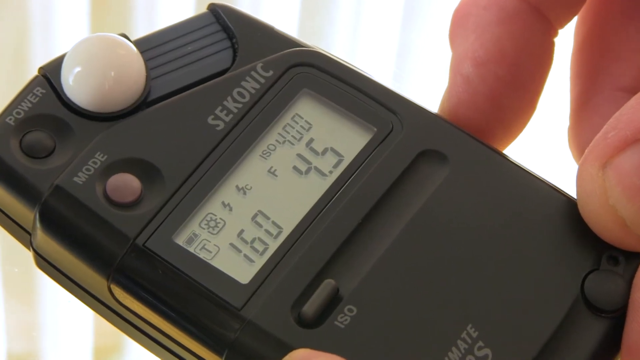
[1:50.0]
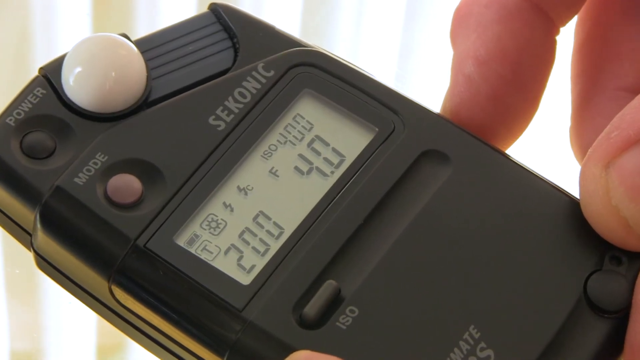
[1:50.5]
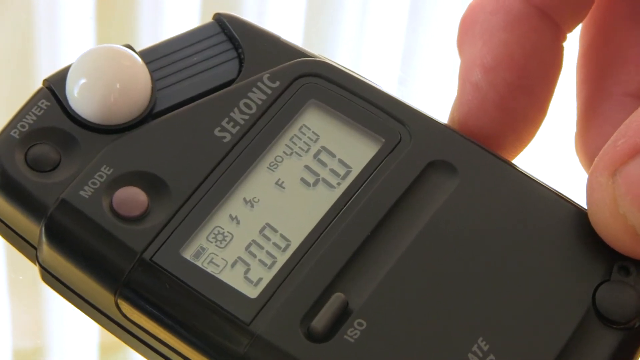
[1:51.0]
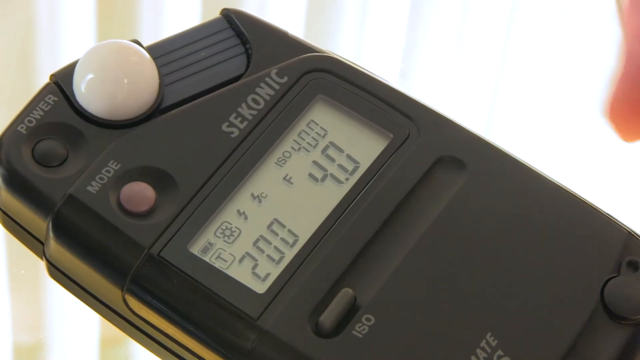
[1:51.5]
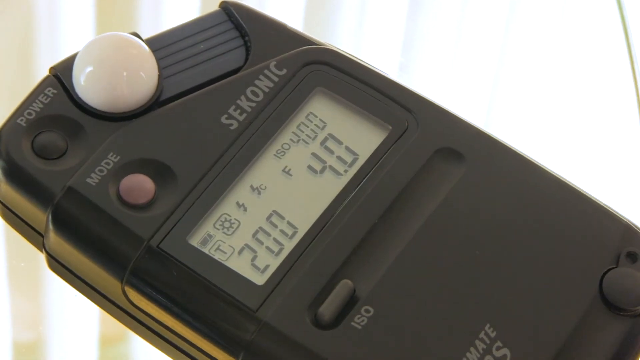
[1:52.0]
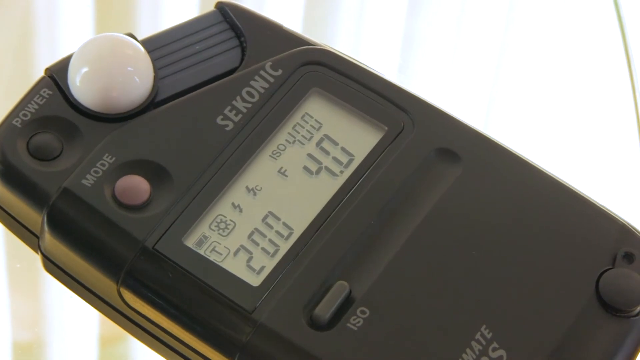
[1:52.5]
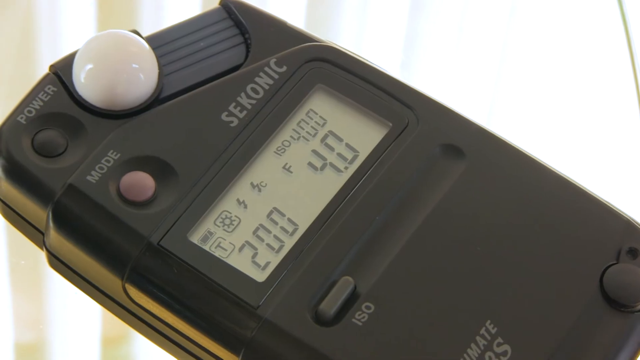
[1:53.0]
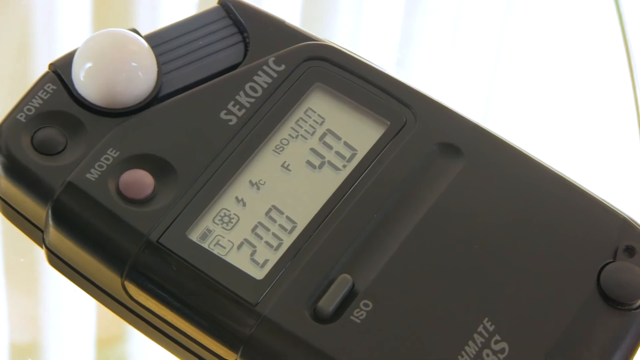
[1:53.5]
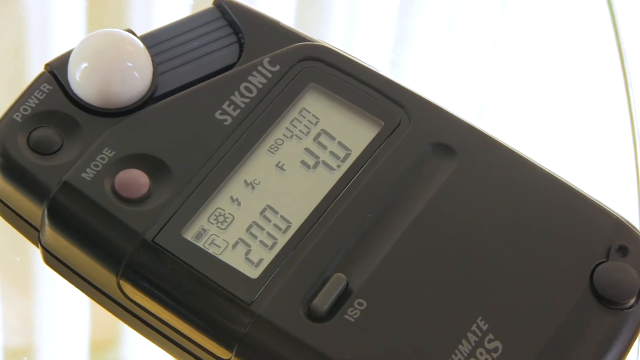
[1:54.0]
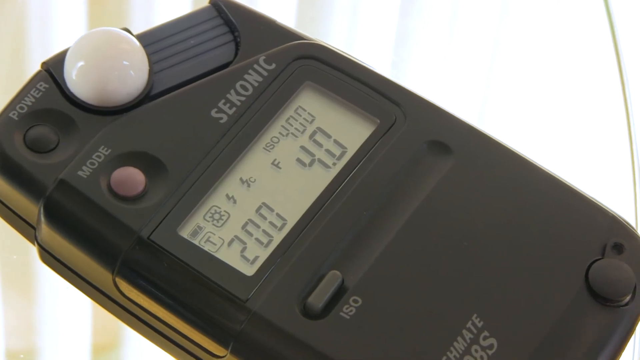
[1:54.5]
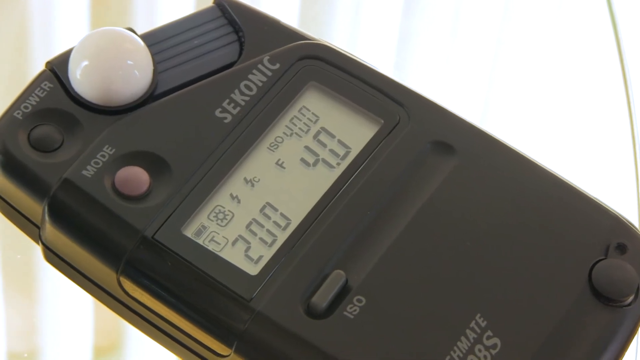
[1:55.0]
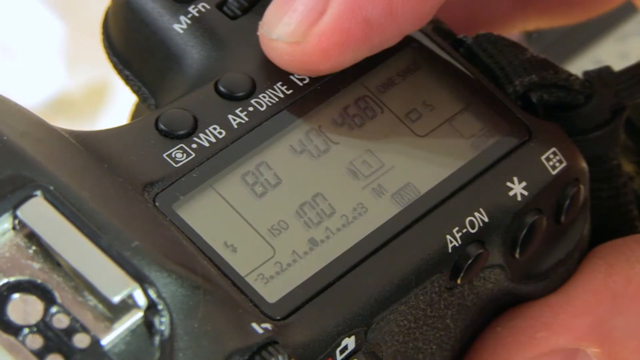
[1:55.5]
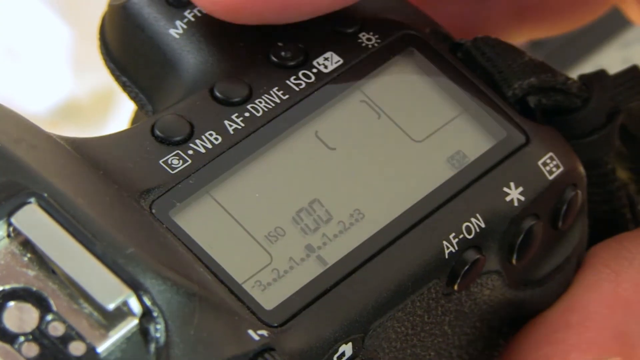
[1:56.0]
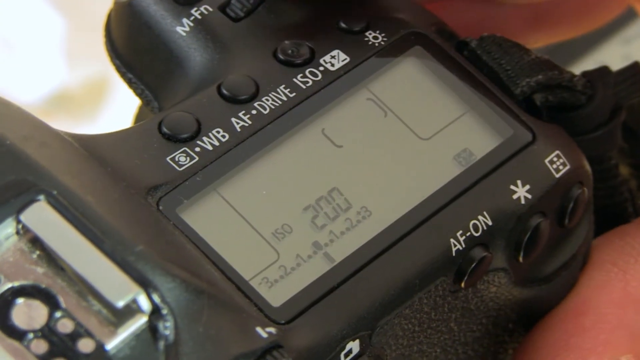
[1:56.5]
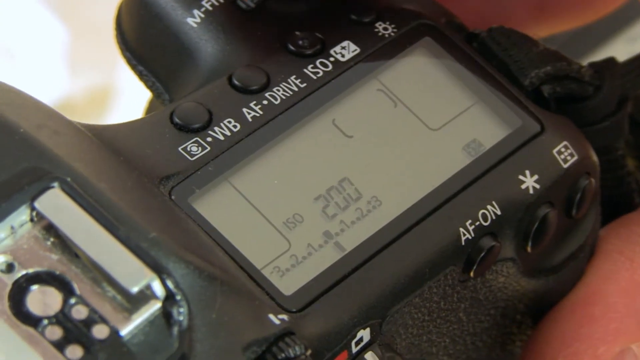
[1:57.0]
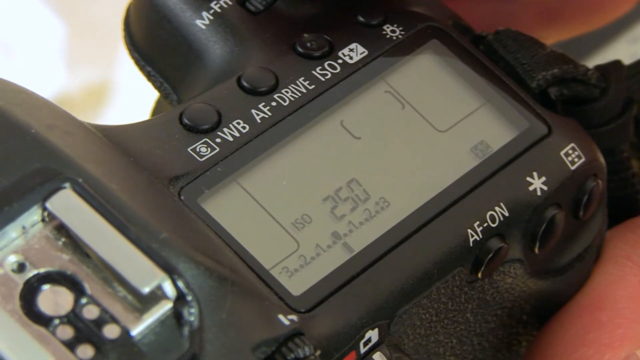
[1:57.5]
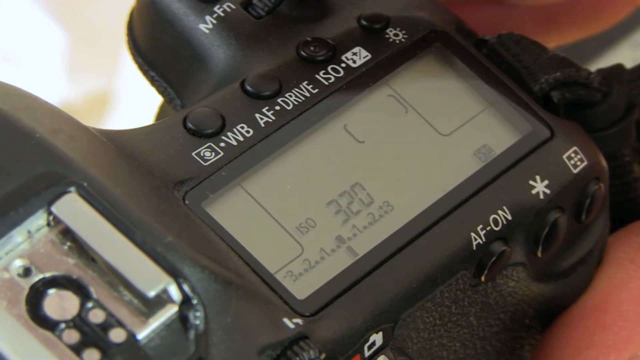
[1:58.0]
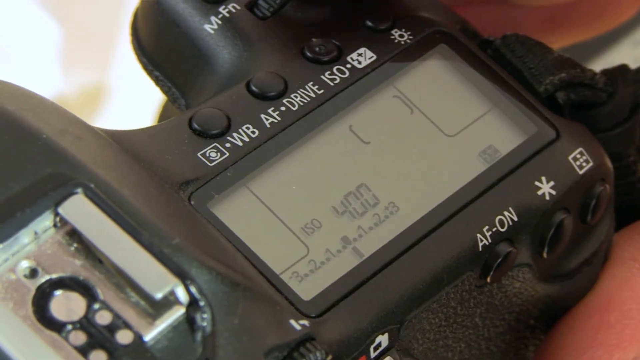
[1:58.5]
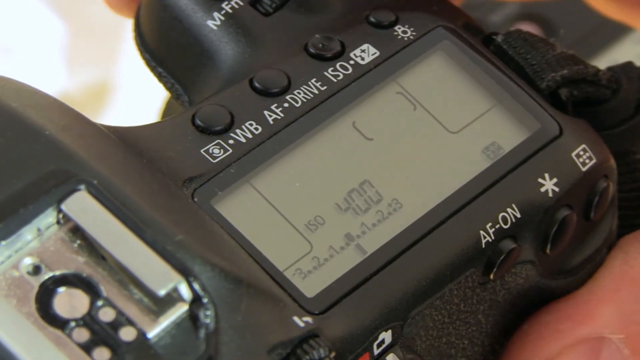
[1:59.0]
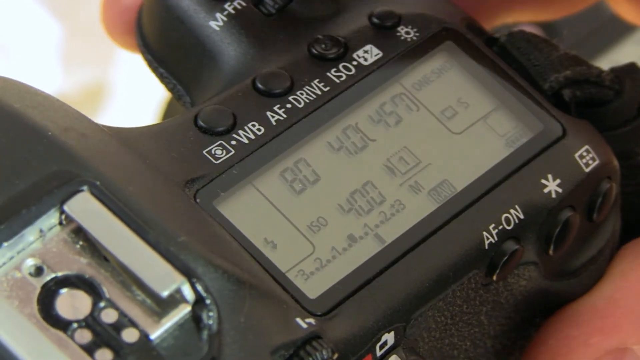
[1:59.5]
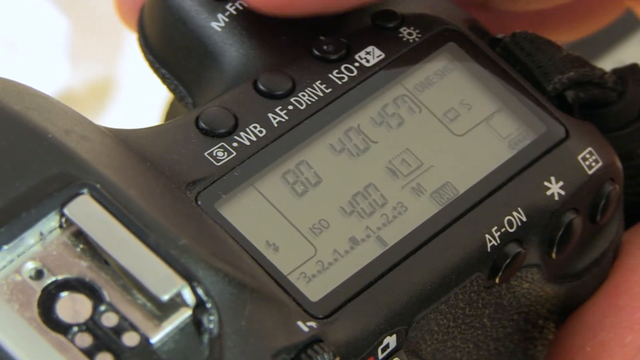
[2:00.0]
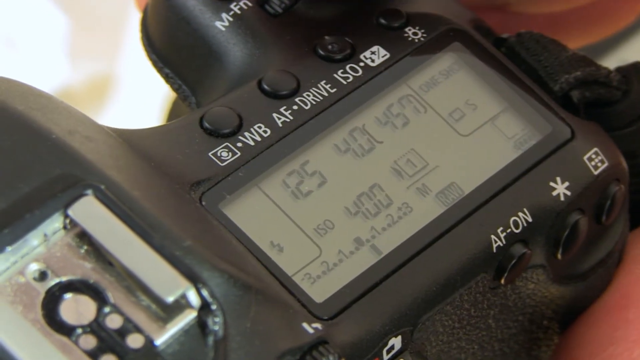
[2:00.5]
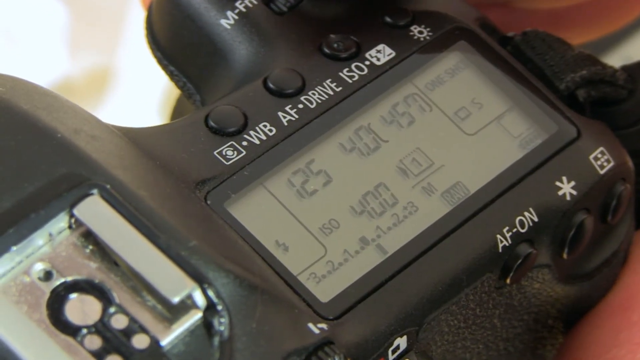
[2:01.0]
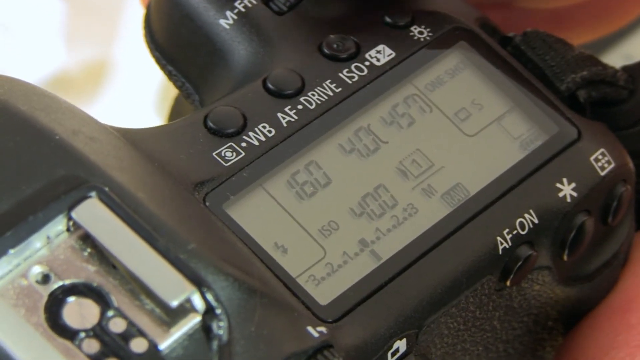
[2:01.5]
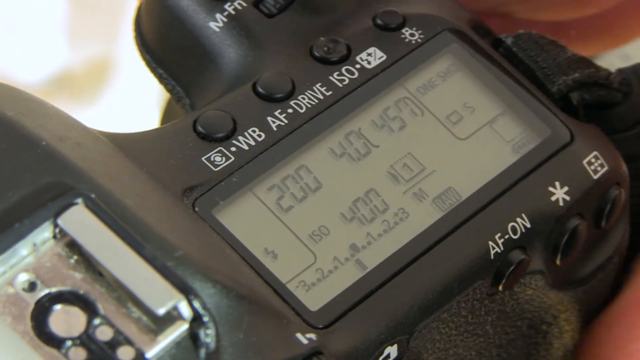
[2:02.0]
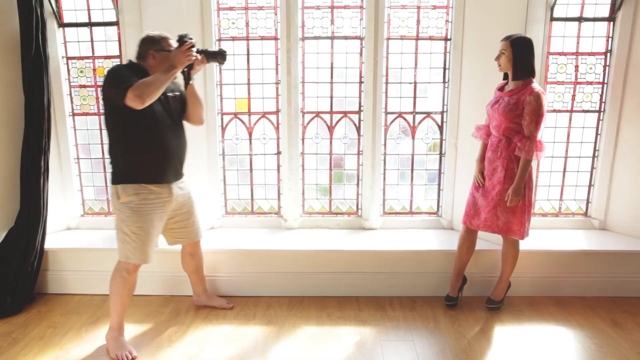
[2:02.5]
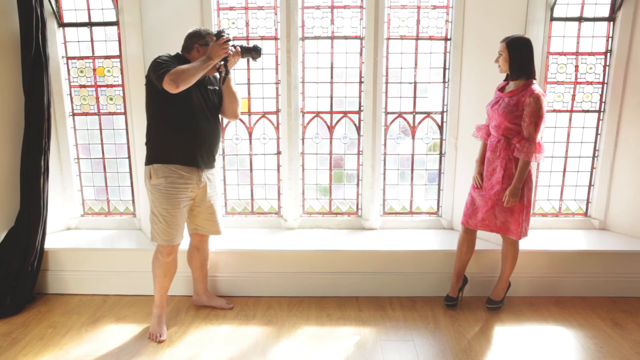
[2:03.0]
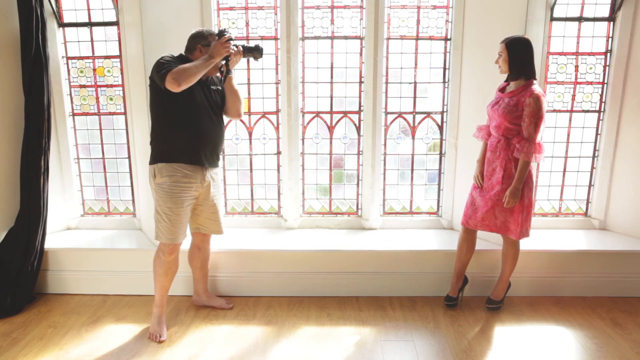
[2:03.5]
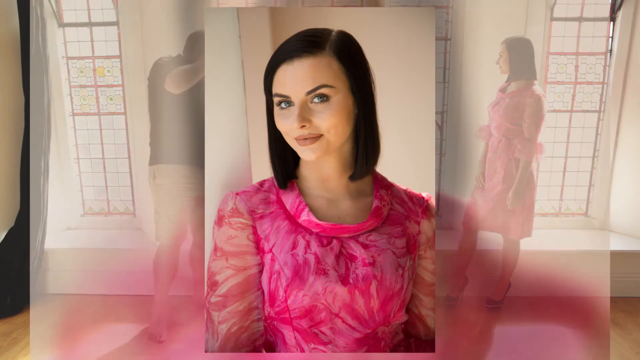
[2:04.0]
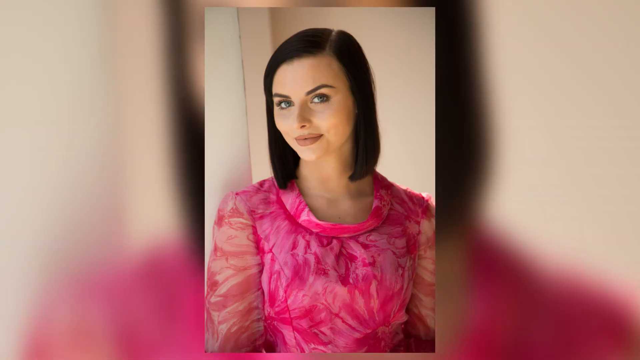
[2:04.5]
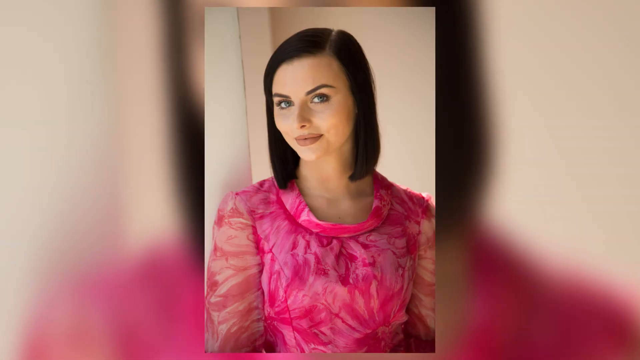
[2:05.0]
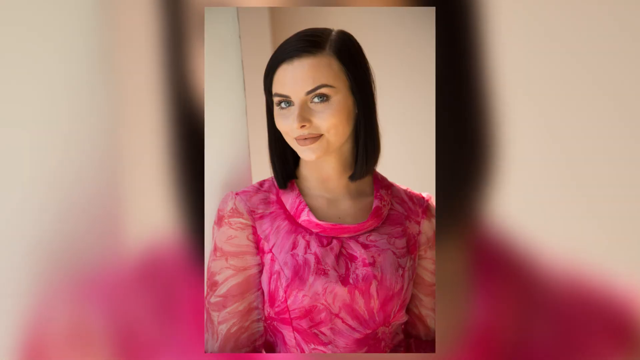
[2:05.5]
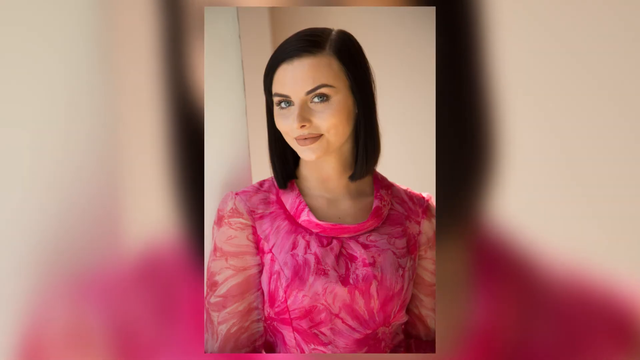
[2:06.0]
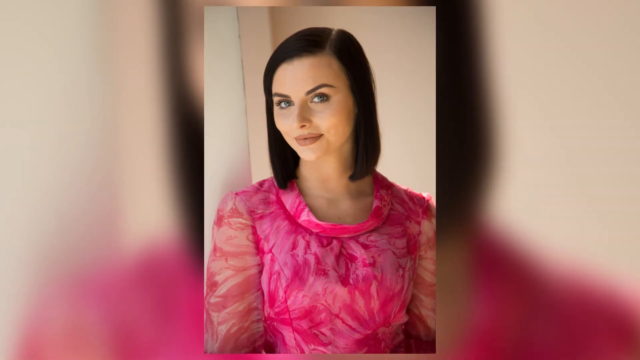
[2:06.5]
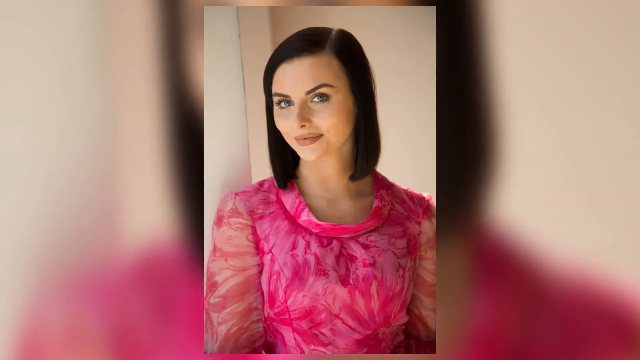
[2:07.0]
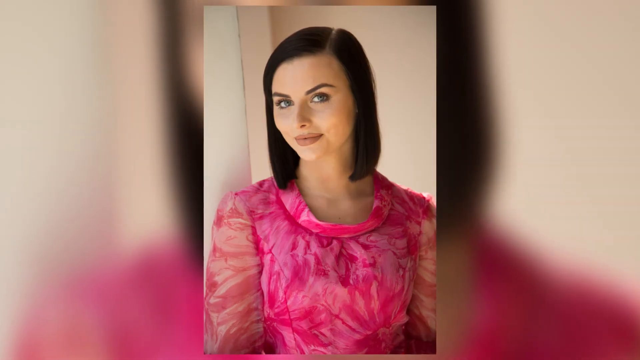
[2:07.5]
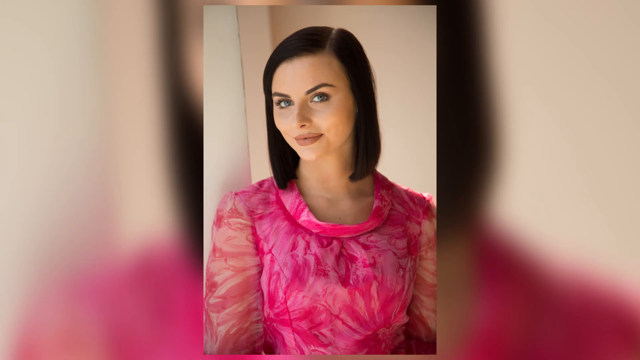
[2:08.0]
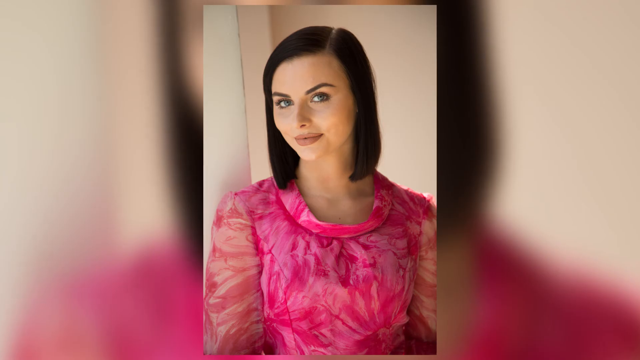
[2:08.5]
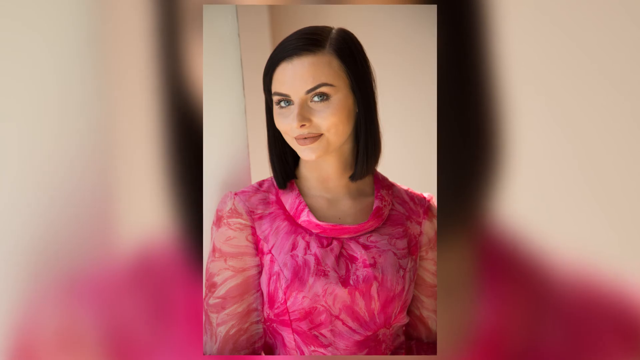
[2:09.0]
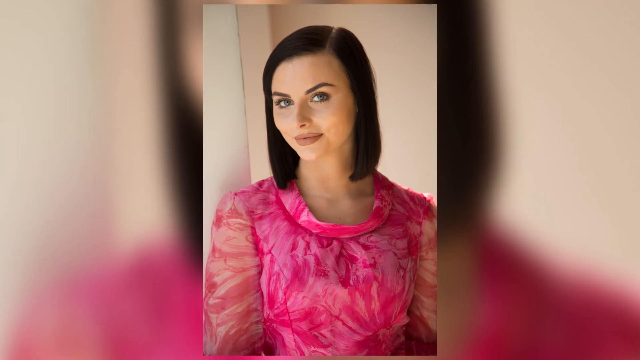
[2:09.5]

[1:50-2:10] The screen still shows the device, with settings of 200, then 4.0, and the ISO at 400. The device is just sitting there, and then the view switches to the top of the camera, where the settings change as well as he adjusts them. After that, the man and the woman are in front of the stained-glass windows again; the woman in the pink dress poses while the man in the black polo shirt takes photos of her with the camera. The image of the woman posing is then displayed on the screen; it is very clear and evidently taken in natural lighting. Behind it is the same image blurred. Her bright pink dress sets off her clear skin and eyes.